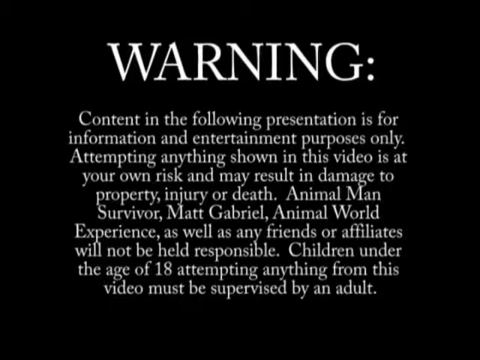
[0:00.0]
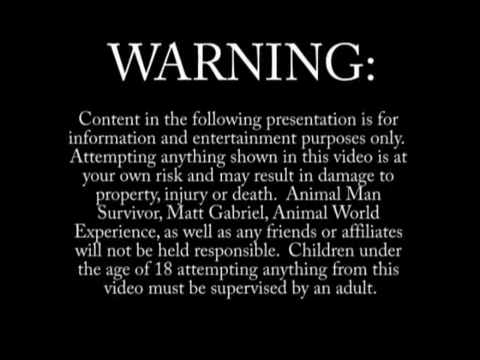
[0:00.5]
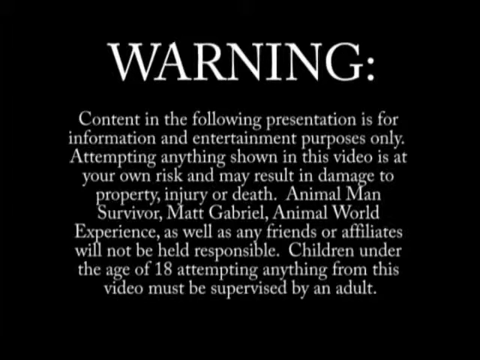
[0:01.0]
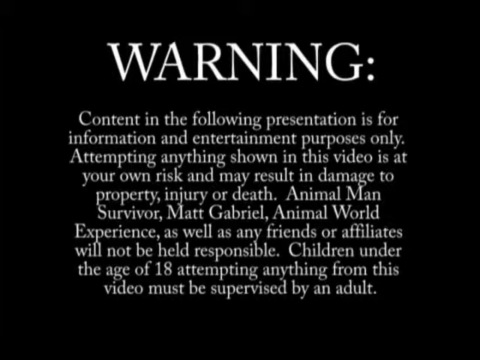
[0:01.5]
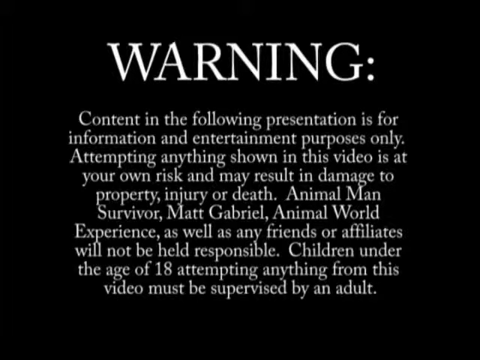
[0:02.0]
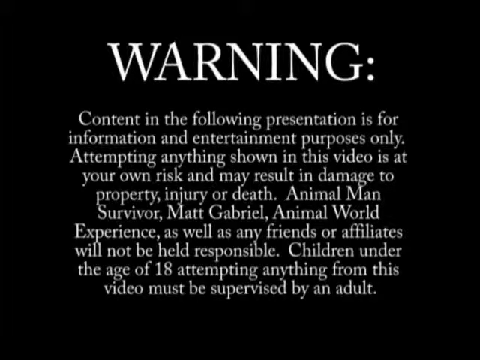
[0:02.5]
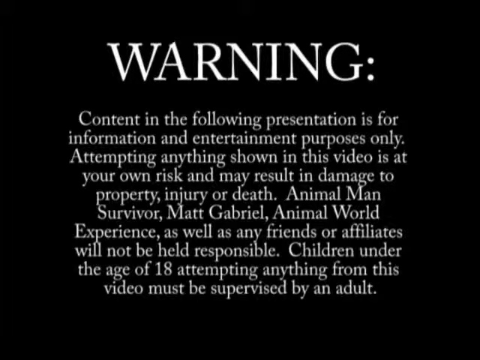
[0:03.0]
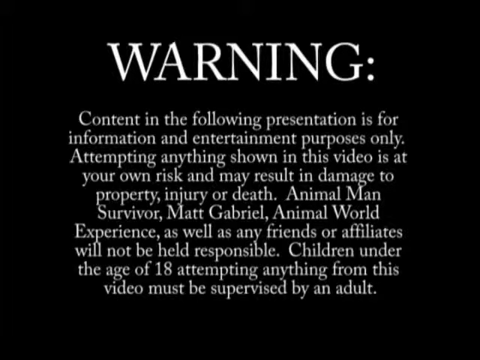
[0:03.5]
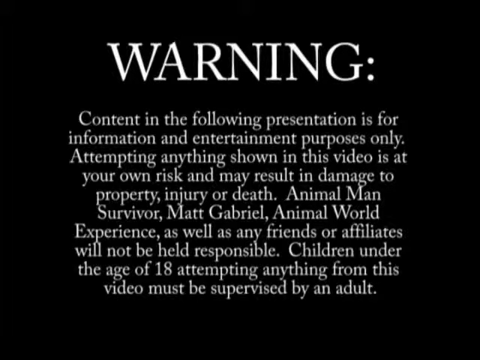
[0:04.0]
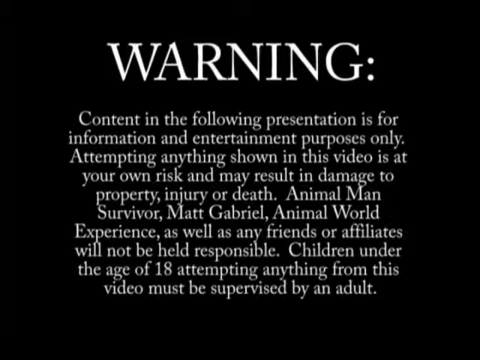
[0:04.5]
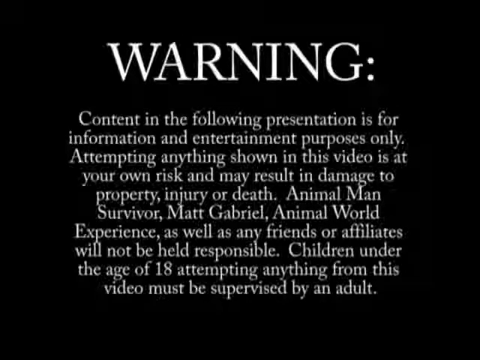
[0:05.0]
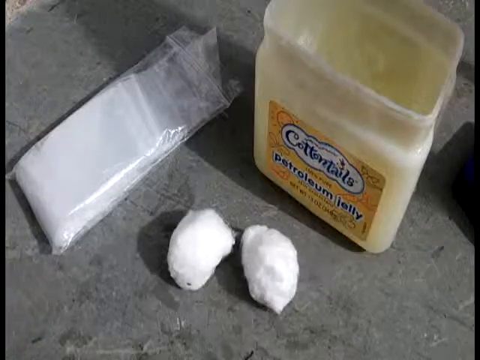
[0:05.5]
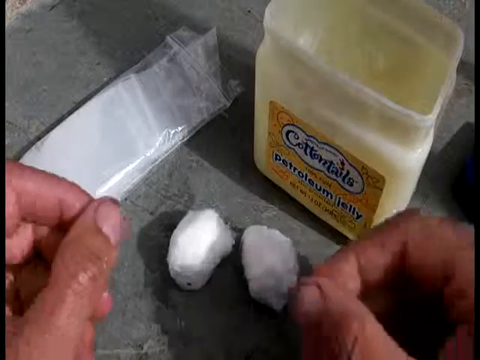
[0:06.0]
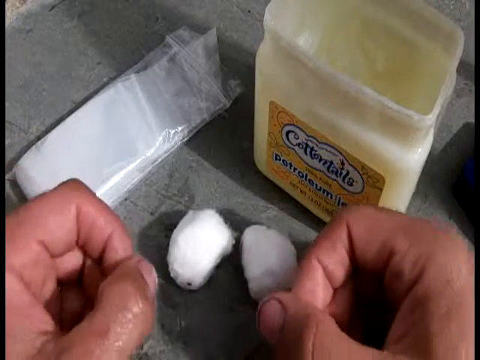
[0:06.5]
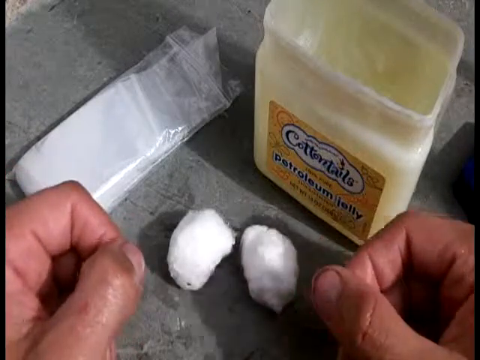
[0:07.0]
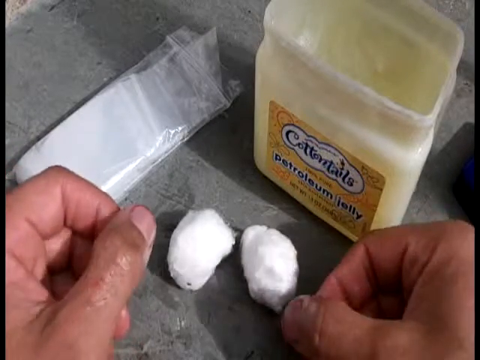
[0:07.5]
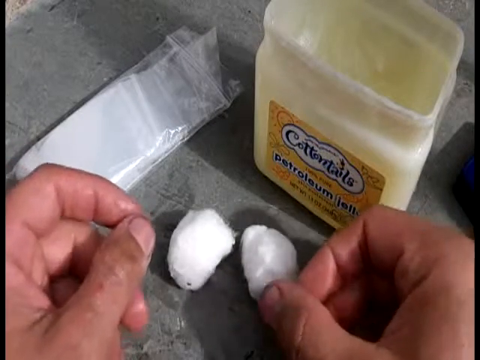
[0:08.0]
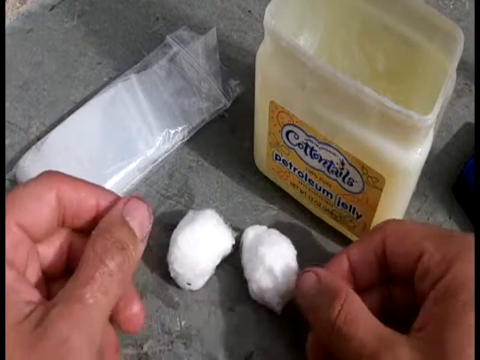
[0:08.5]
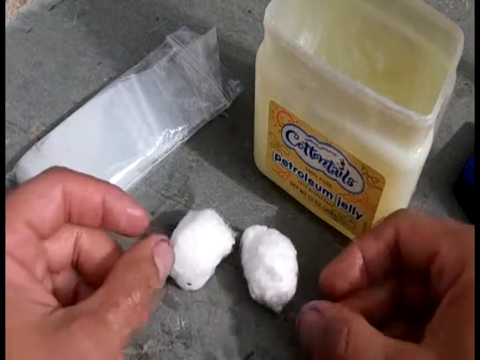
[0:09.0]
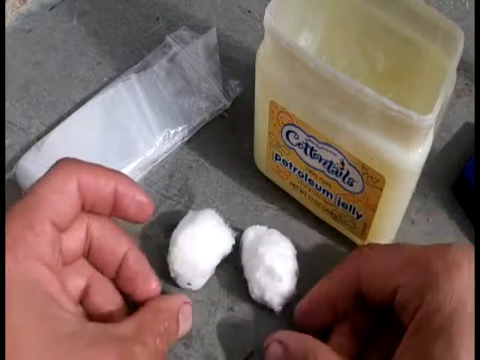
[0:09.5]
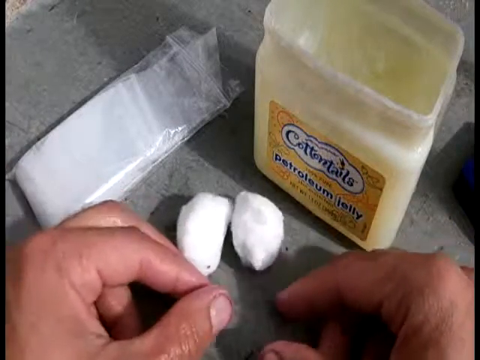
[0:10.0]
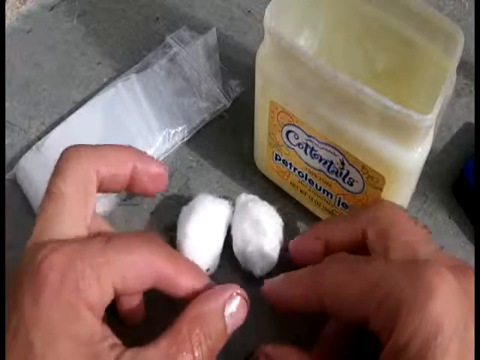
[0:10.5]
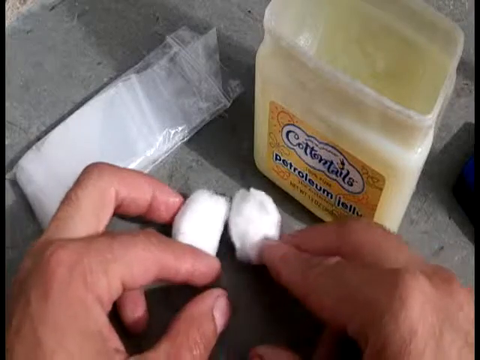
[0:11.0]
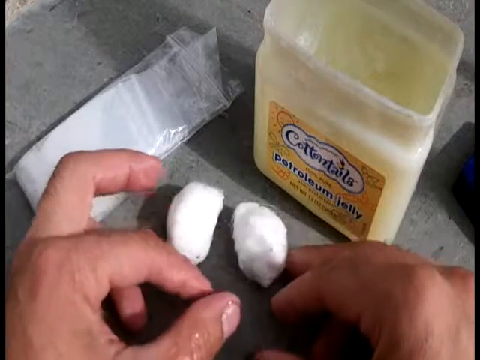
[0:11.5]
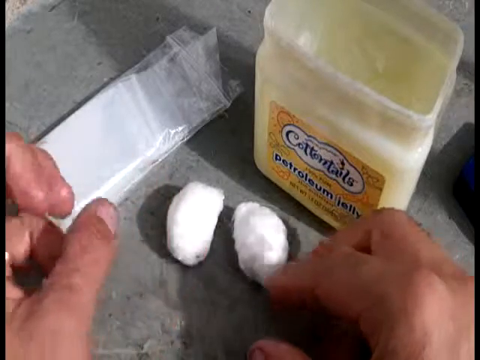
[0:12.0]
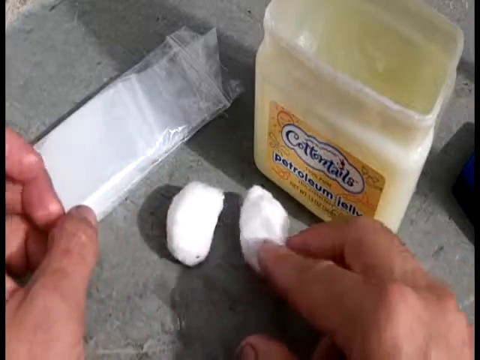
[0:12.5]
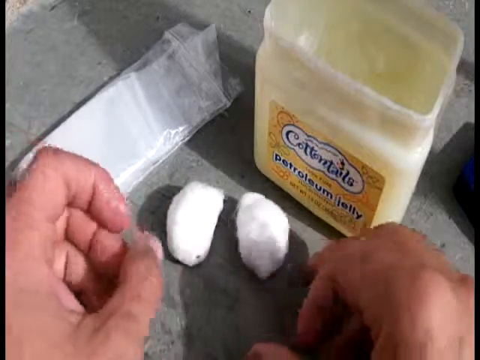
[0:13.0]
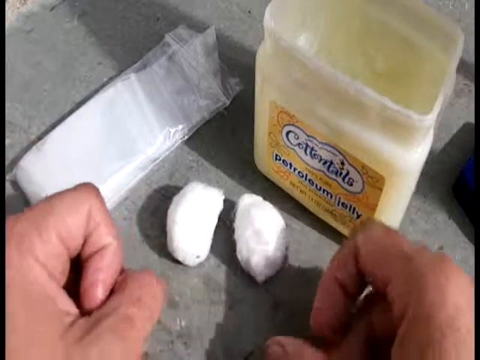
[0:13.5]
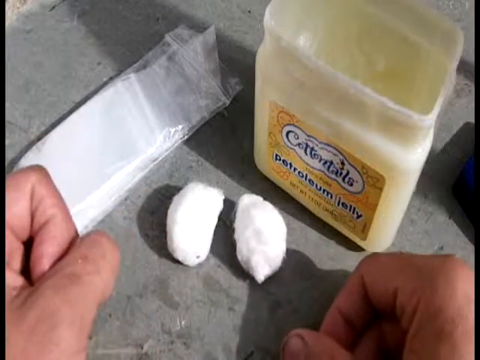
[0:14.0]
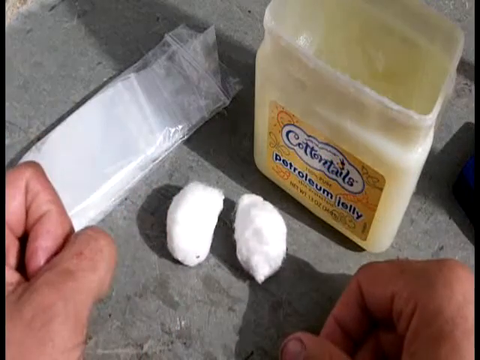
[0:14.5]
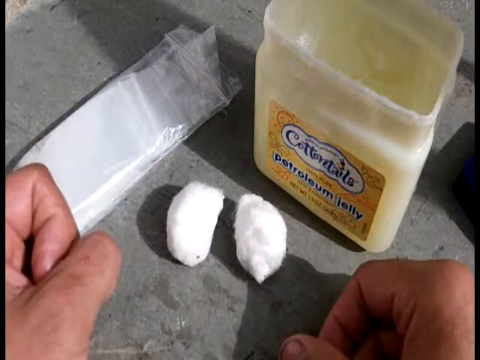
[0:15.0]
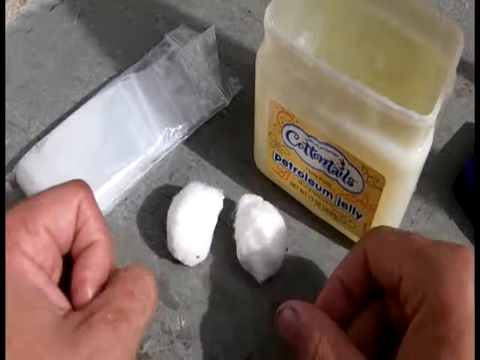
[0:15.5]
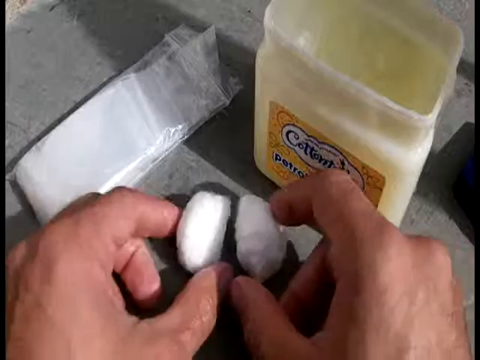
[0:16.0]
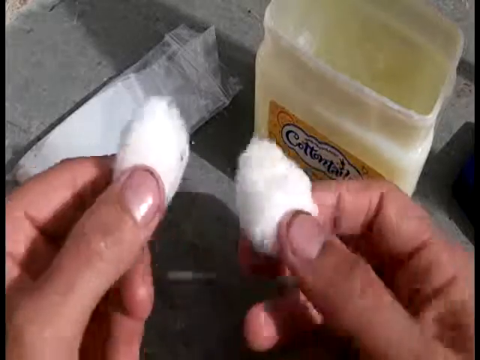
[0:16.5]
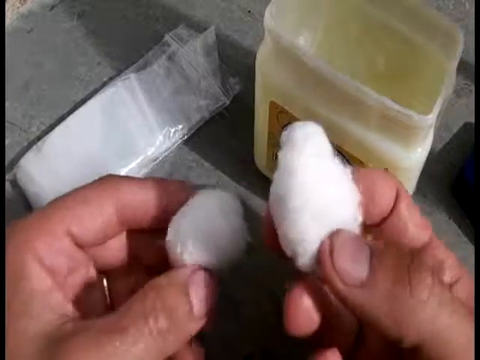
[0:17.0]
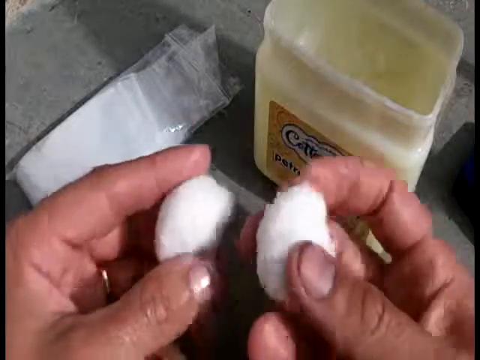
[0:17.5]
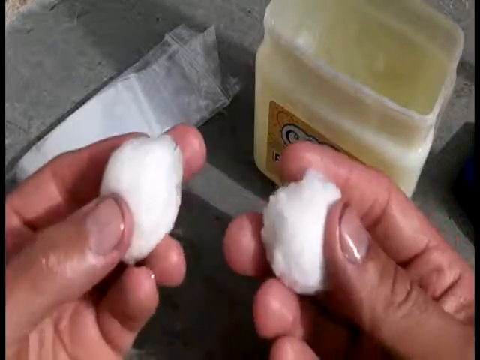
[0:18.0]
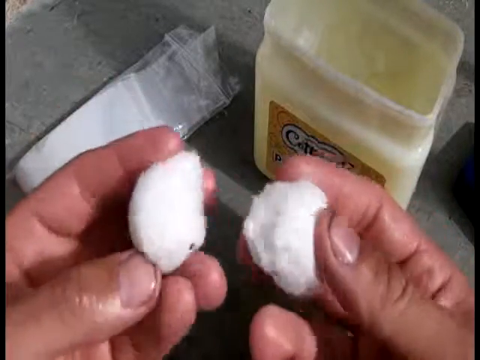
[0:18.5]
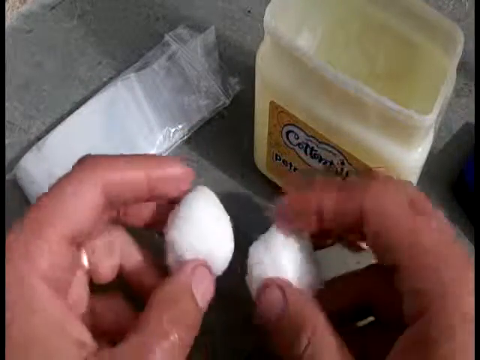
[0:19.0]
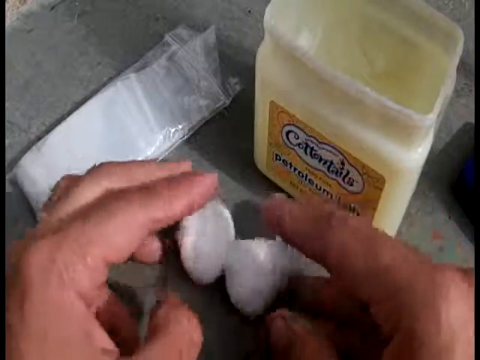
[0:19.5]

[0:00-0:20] The video opens on a black screen with the word "warning" in large white letters at the top. Beneath it, a warning message gives a disclaimer that the content is for information and entertainment purposes only, that anything attempted in the video is at the viewer's own risk, and that the group, Animal Man Survivor, Matt Gabriel, and Animal World Experience, will not be held responsible. Next comes a close-up of a grey tabletop holding a large container of light yellow petroleum jelly, two white cotton balls, and a tall, narrow Ziploc bag that looks like it has many more folded-up bags inside. A pair of hands comes in from the bottom of the screen and moves the cotton balls around a bit, sort of tapping them with the tops of the fingers. The hands then pick up a cotton ball in each hand and sort of feel them gently with the fingers before setting them back on the table.